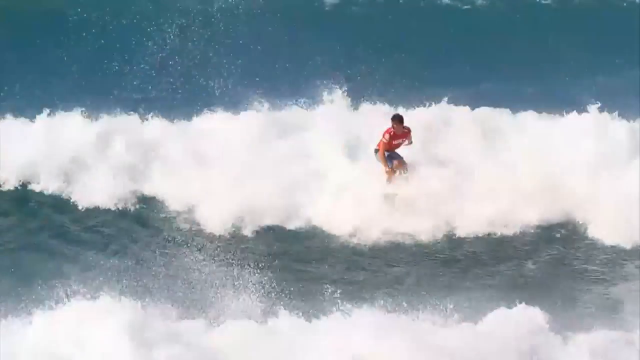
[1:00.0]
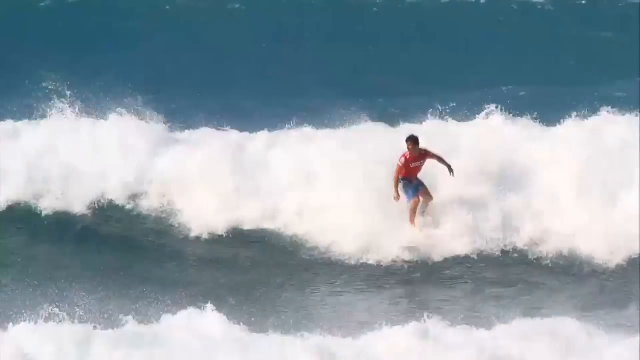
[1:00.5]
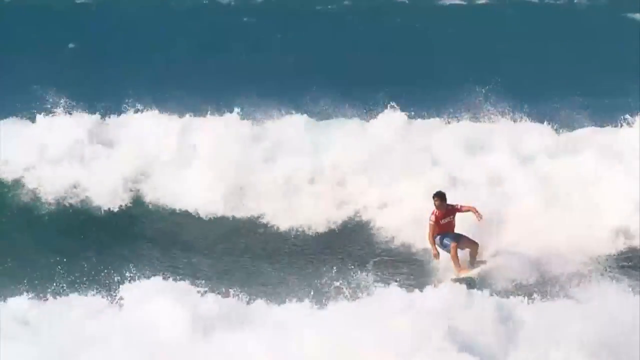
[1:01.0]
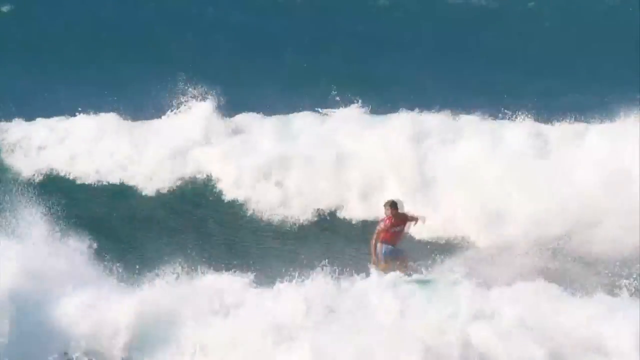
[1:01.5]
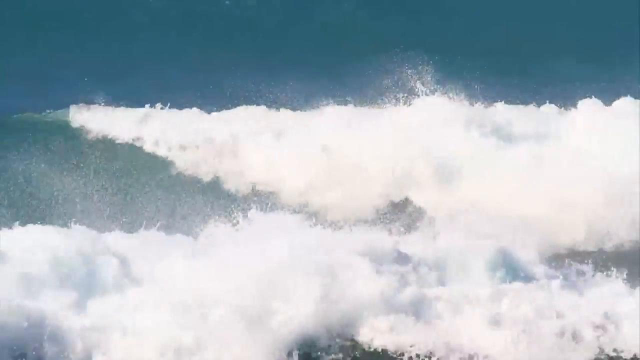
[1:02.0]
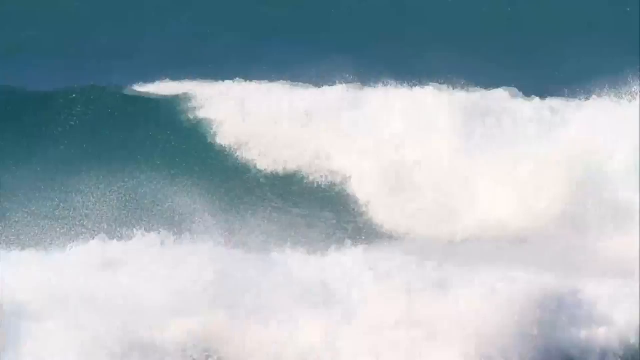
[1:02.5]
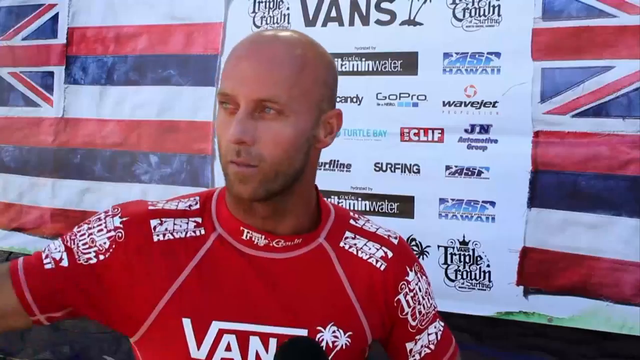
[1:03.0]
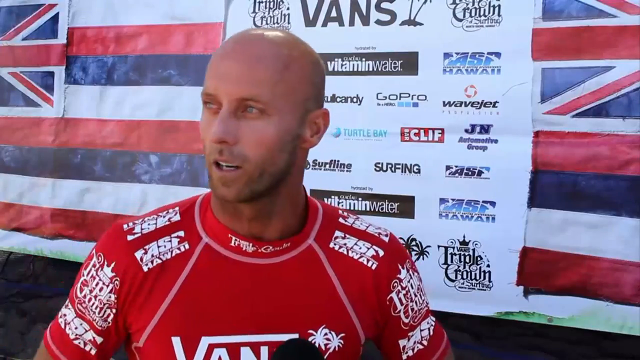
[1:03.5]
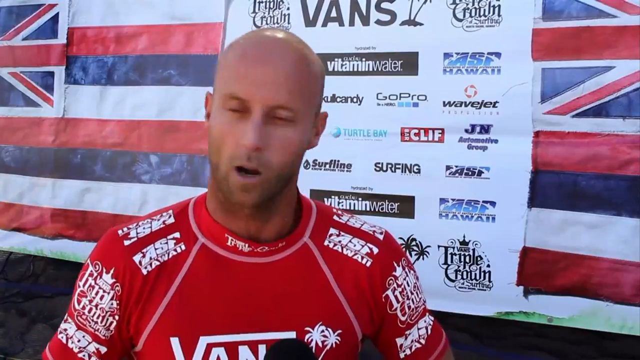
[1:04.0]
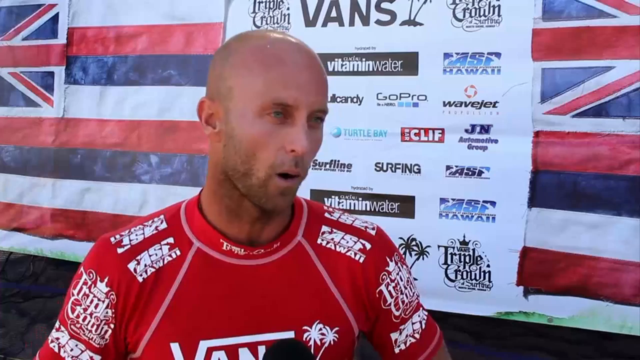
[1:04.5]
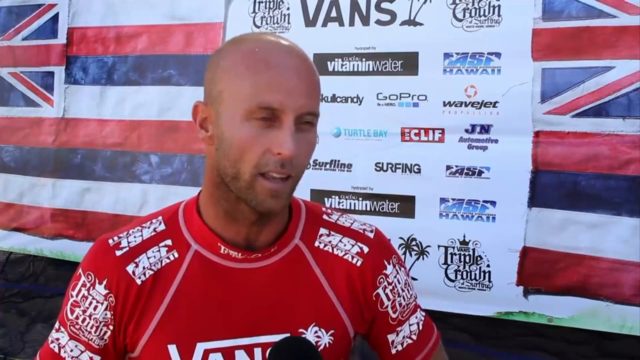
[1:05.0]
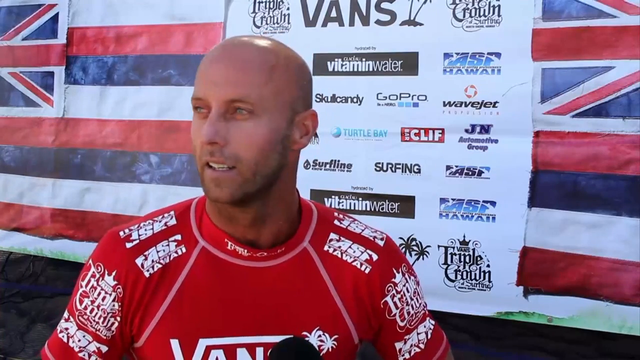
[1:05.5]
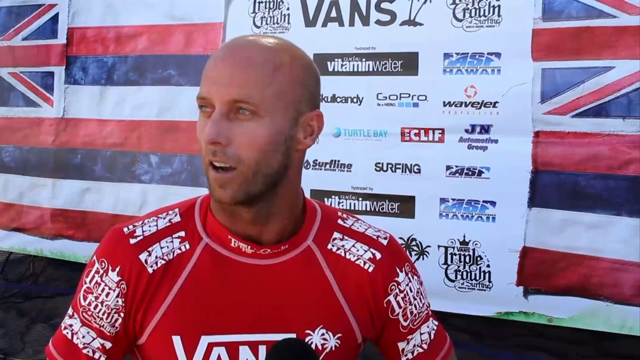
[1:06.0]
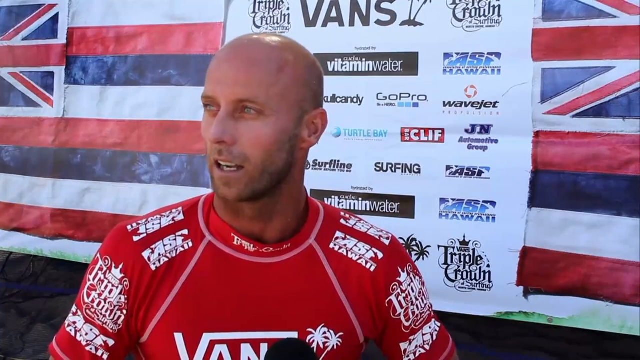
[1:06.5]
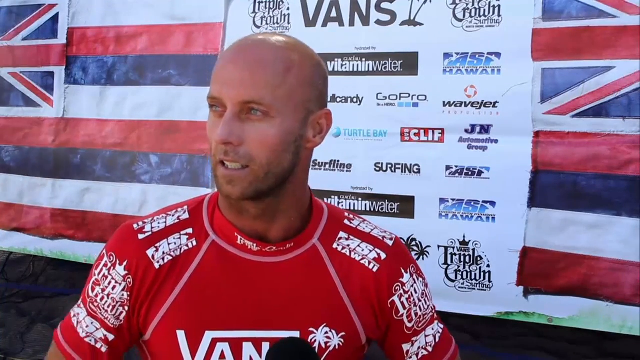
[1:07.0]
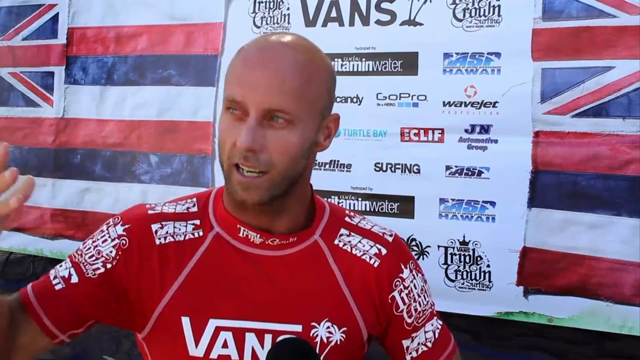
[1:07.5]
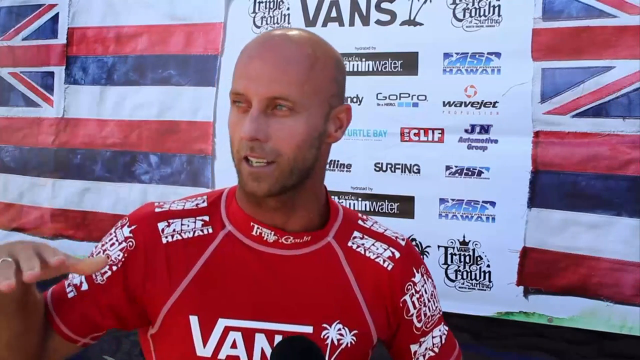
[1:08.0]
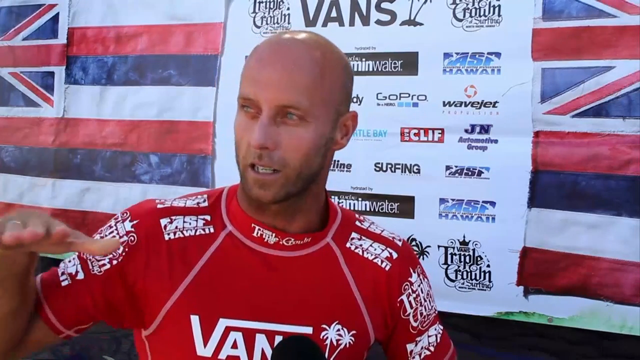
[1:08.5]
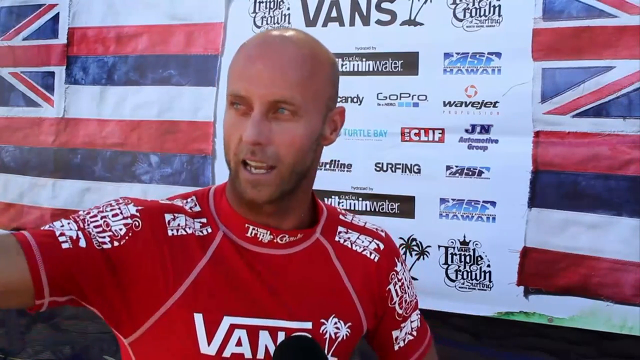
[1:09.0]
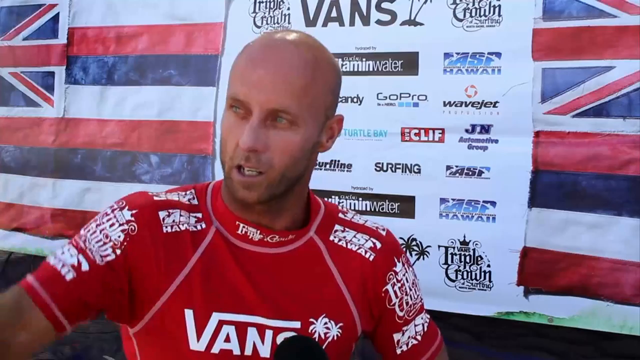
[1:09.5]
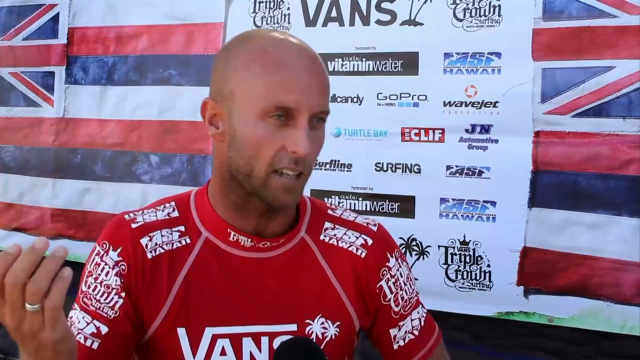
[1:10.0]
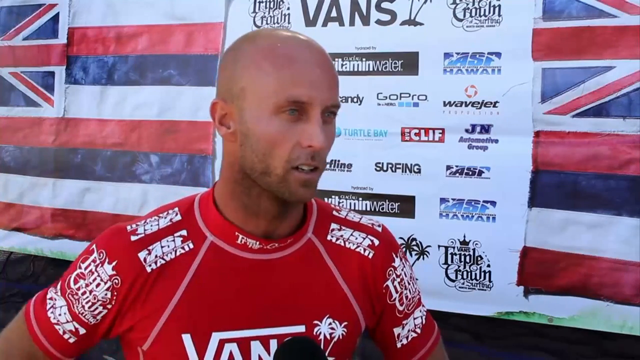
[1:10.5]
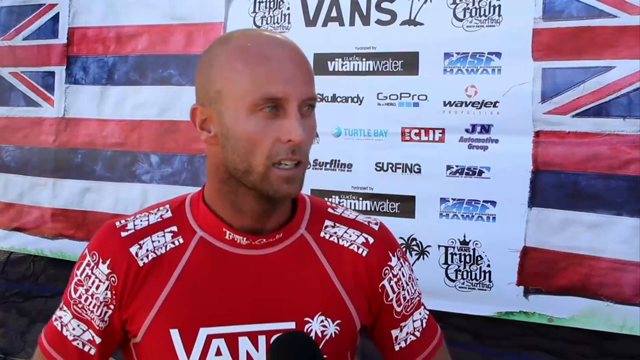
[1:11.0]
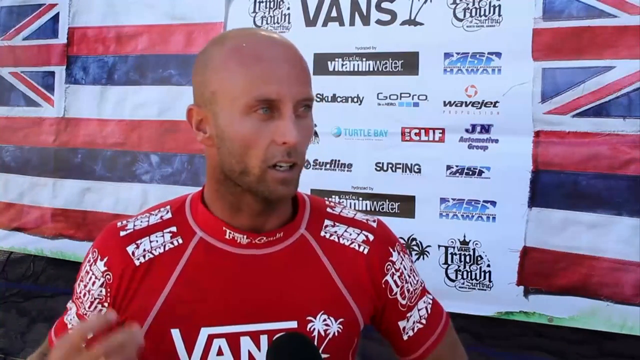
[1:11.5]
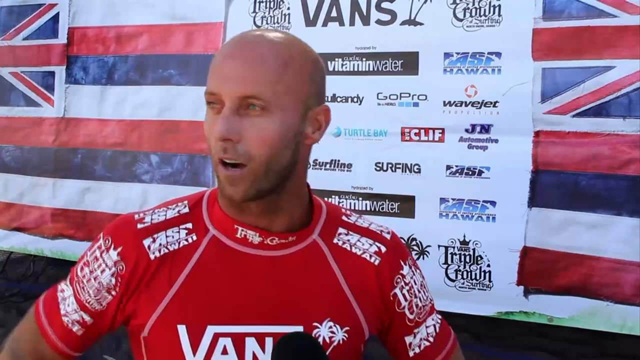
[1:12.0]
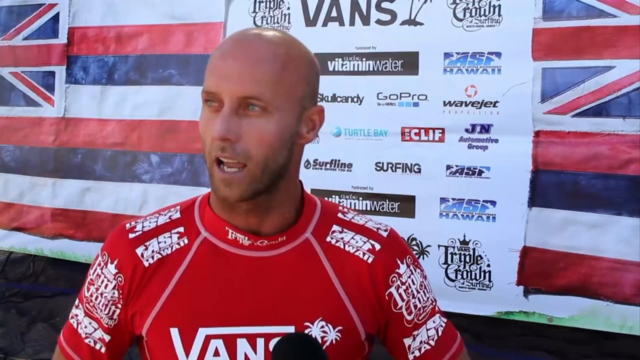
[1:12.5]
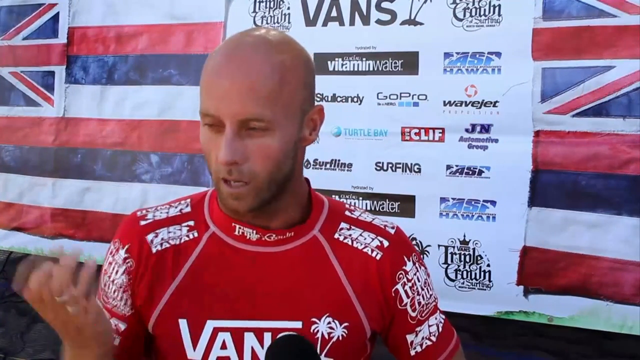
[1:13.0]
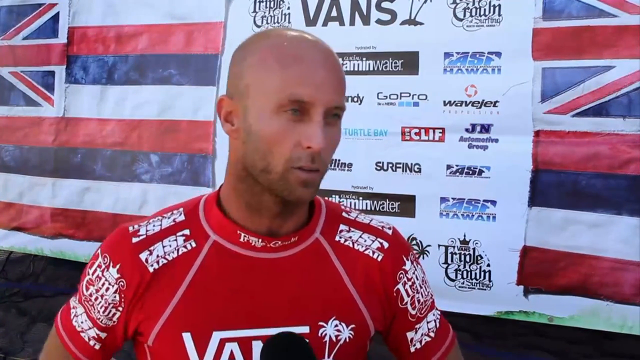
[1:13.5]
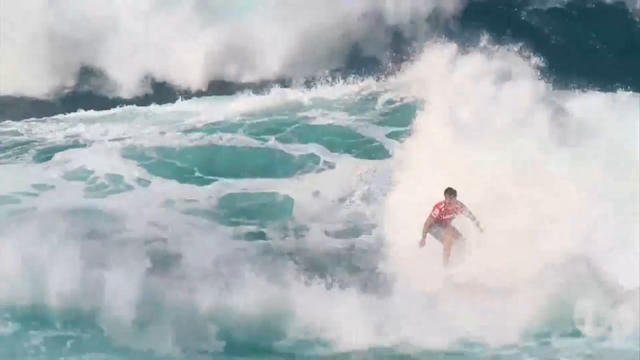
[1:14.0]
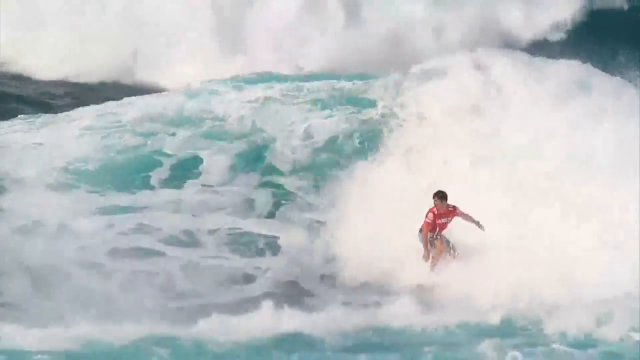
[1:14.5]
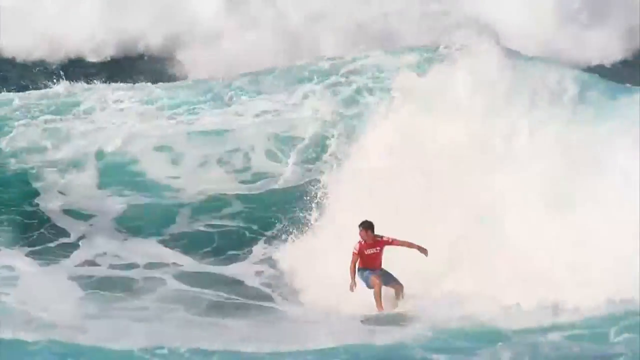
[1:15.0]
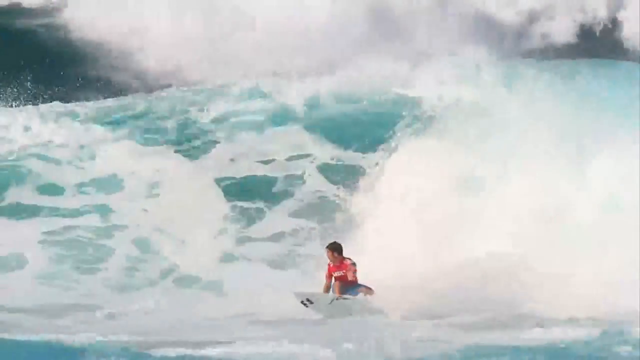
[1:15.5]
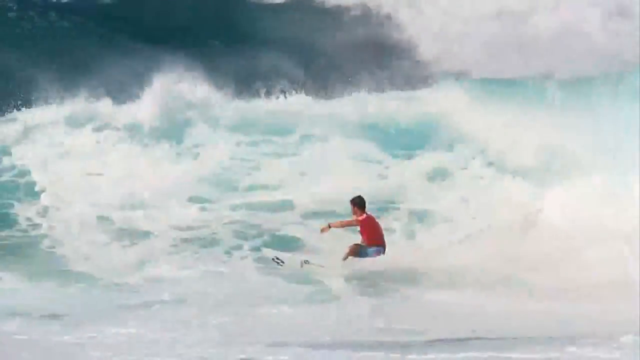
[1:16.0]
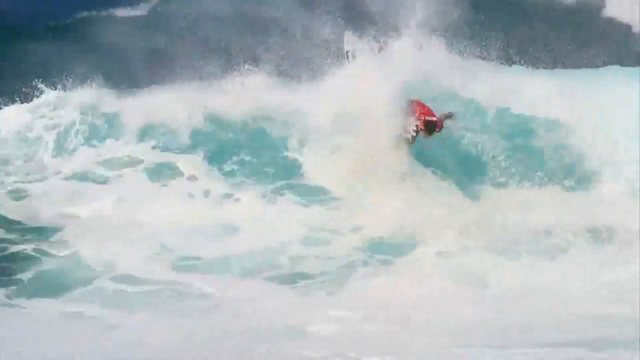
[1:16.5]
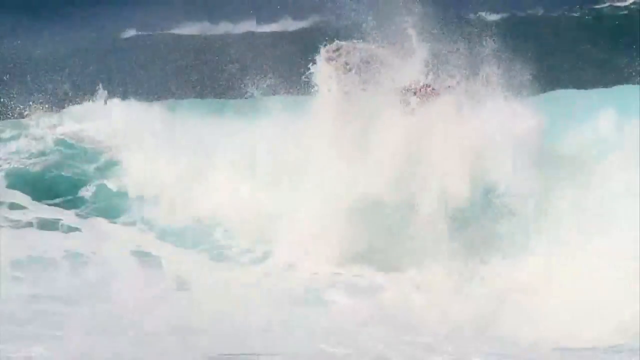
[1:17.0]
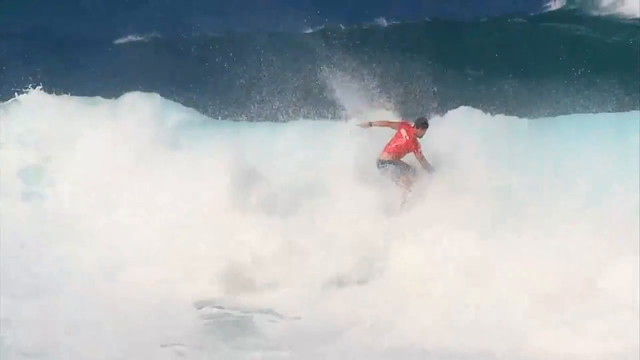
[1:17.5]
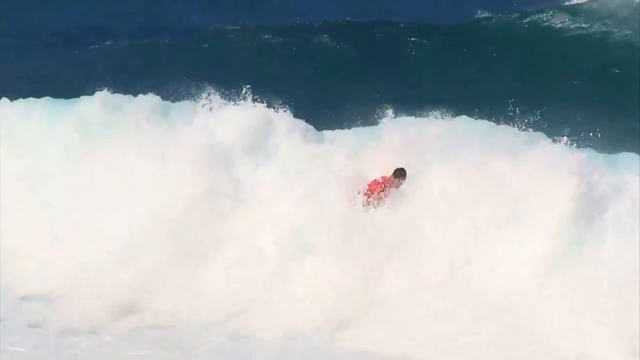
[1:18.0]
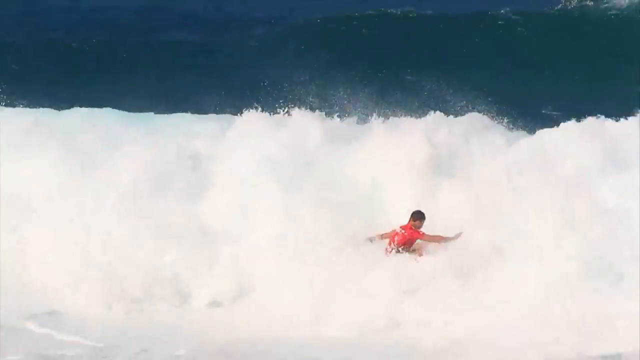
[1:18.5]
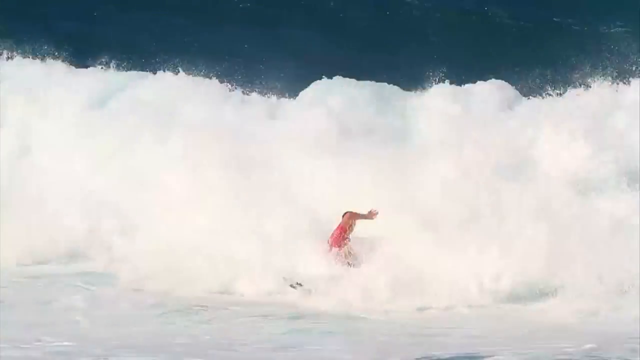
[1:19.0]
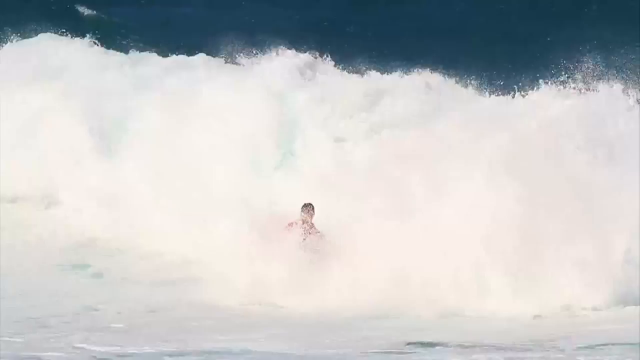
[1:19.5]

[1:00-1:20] A surfboard rider wearing a red shirt and black shorts rides along the surface of the water at the tip of a wave, which splashes across the surface at high speed and creates a white misty effect. He comes across an opposing wave heading toward the first wave, navigates his board between both waves, and disappears between the two white walls. The video cuts back to the man in front of the English flags as he begins talking to the interviewer; he points toward the left of the screen and then turns his head toward the right of the screen. The video cuts back to the surfer riding on the tip of the waves again. The water moves so fast that no blue is visible in it, only white. He falls off his surfboard after crashing into the wall of water rapids.